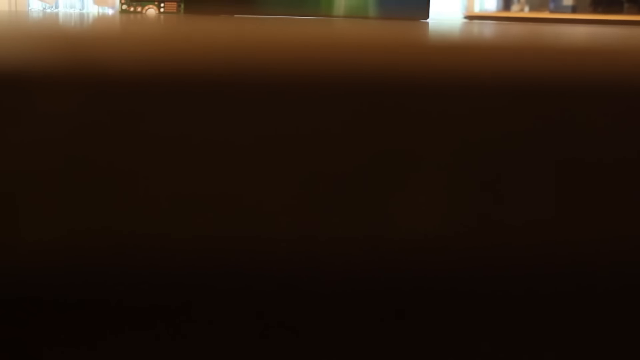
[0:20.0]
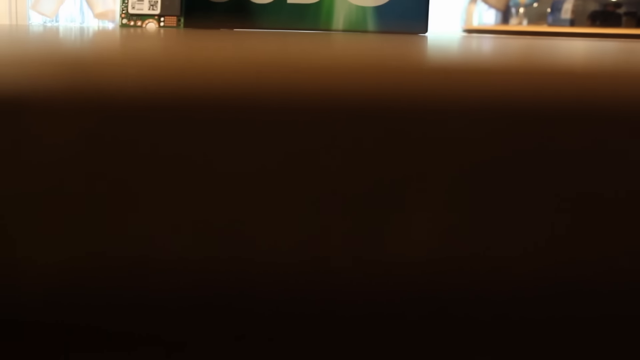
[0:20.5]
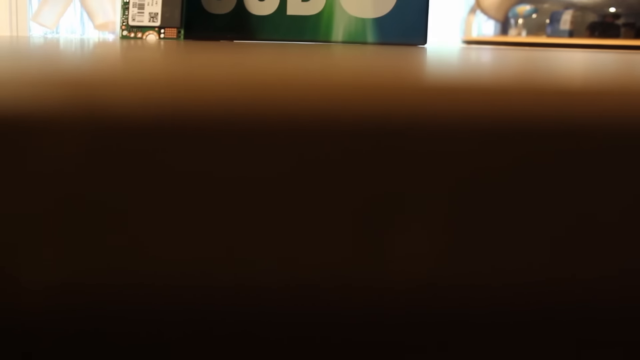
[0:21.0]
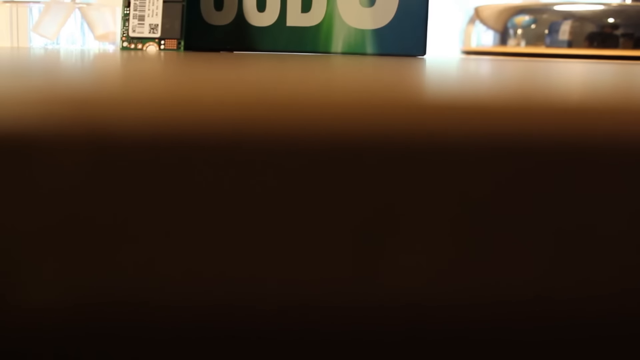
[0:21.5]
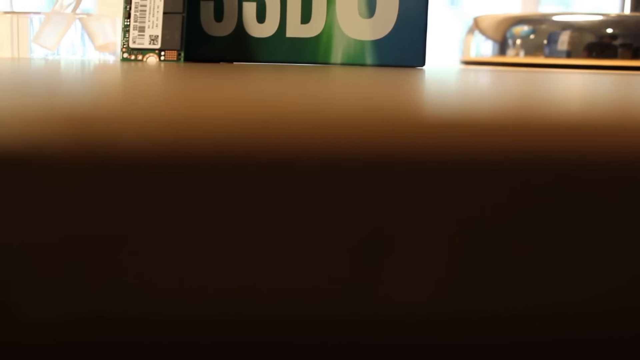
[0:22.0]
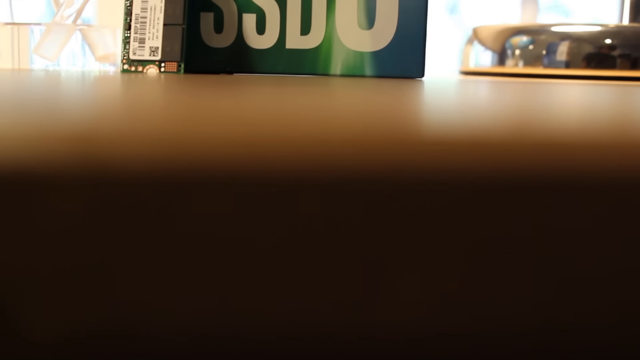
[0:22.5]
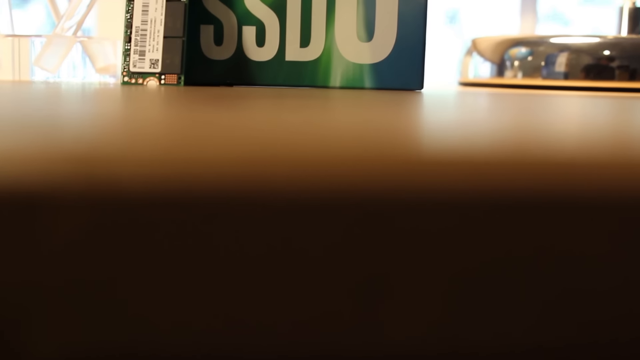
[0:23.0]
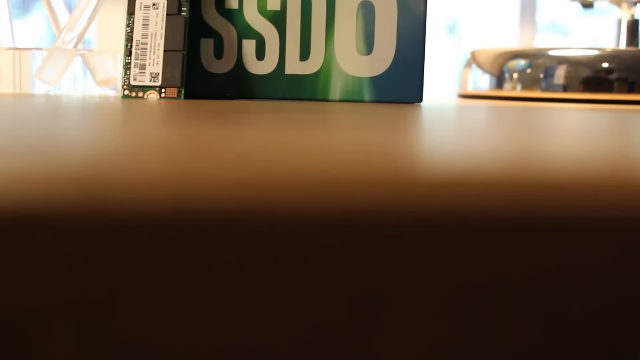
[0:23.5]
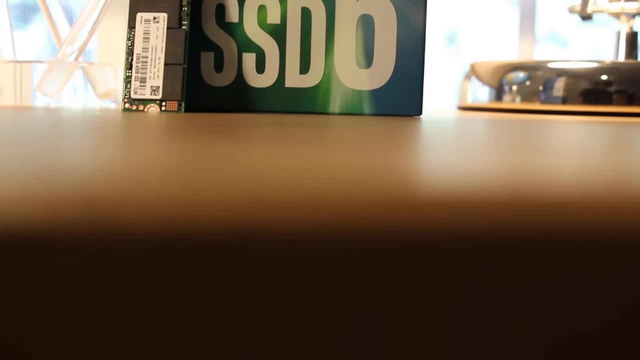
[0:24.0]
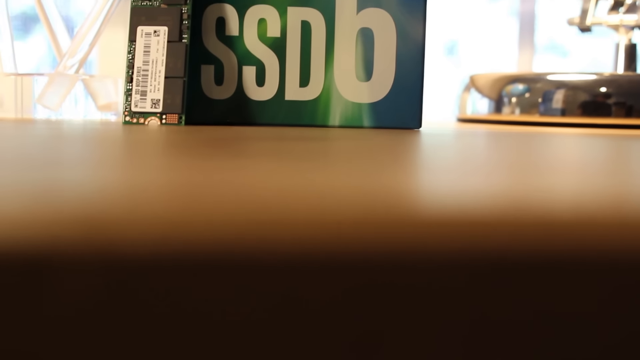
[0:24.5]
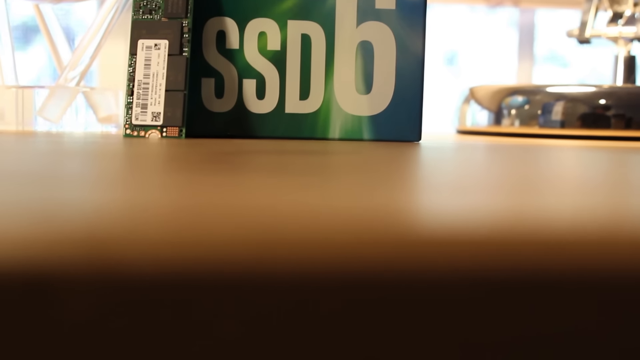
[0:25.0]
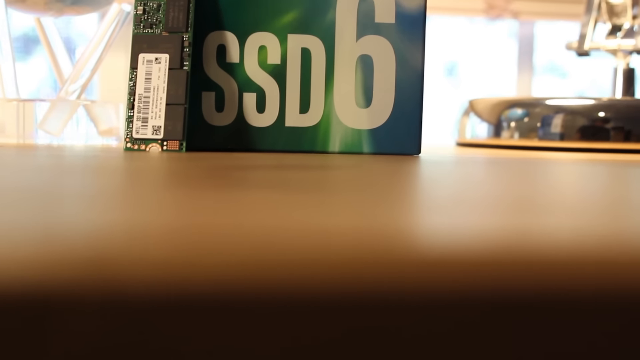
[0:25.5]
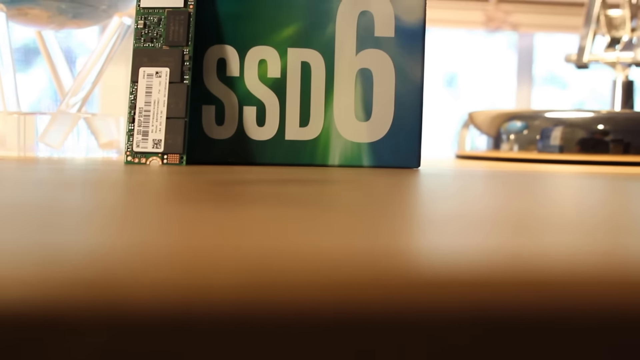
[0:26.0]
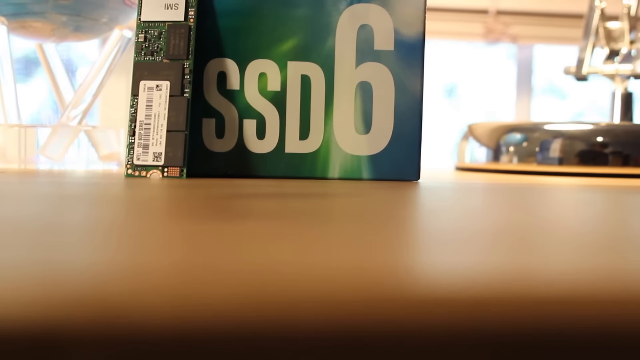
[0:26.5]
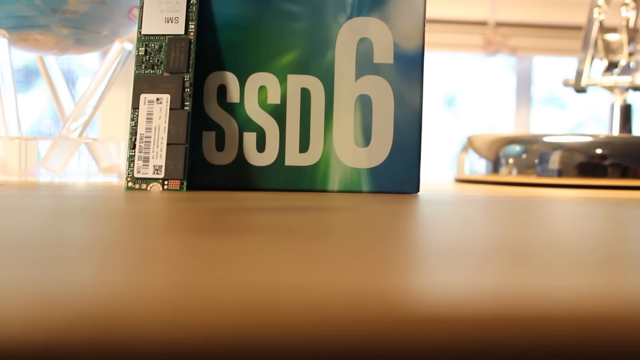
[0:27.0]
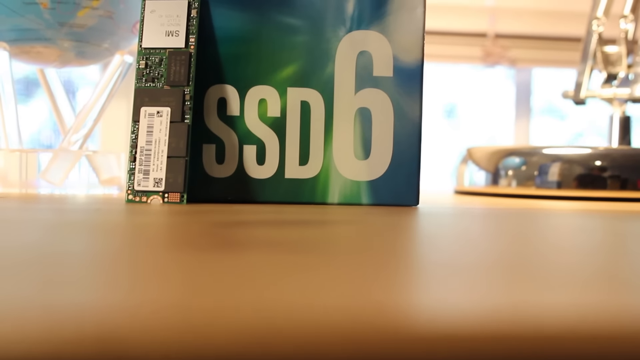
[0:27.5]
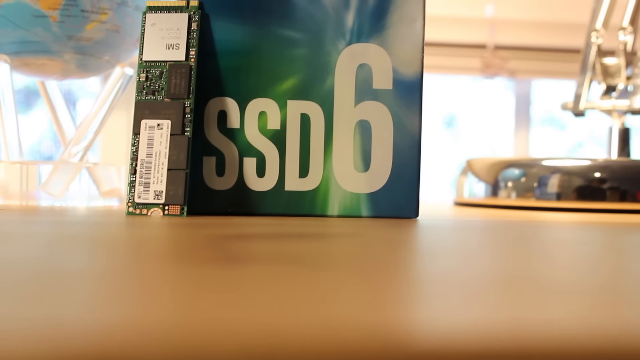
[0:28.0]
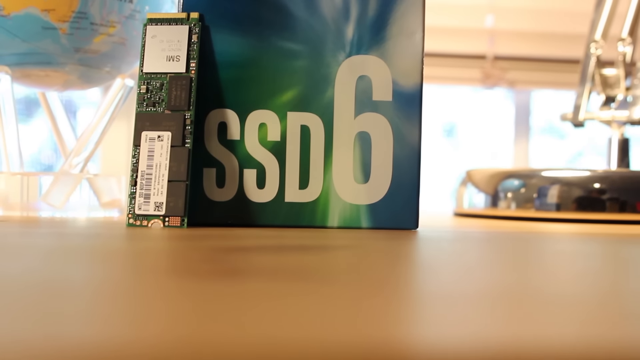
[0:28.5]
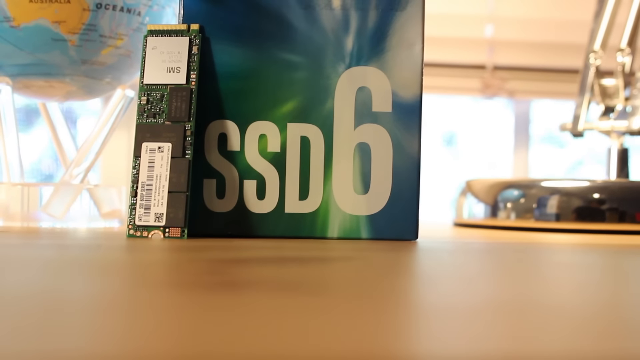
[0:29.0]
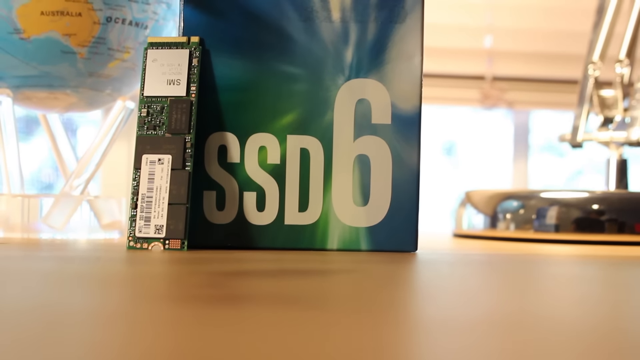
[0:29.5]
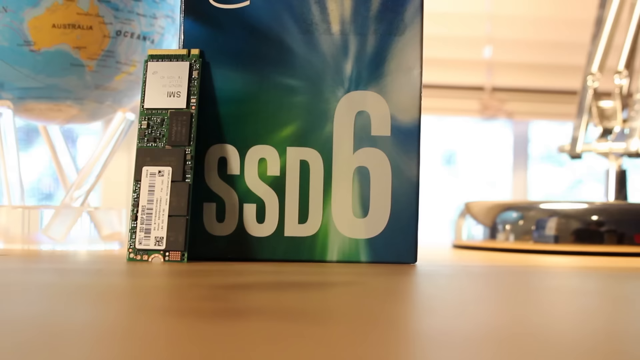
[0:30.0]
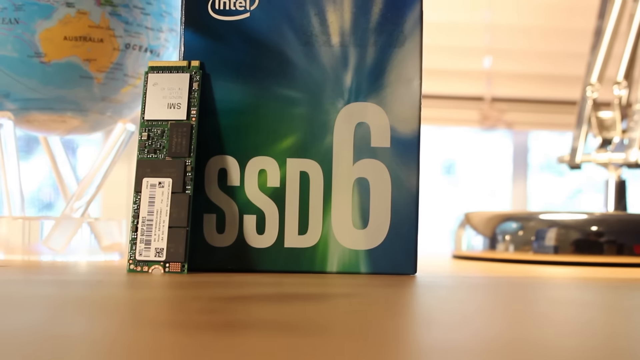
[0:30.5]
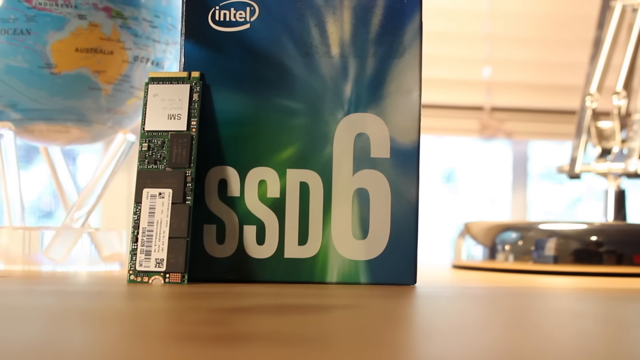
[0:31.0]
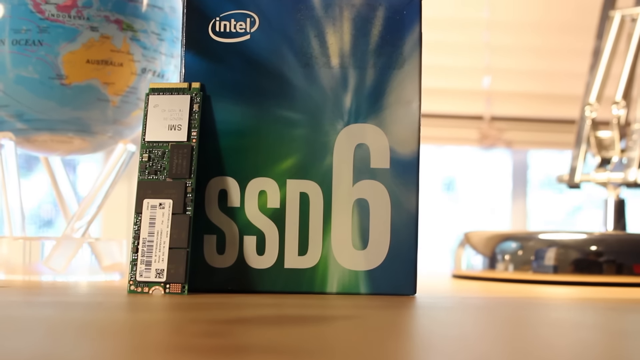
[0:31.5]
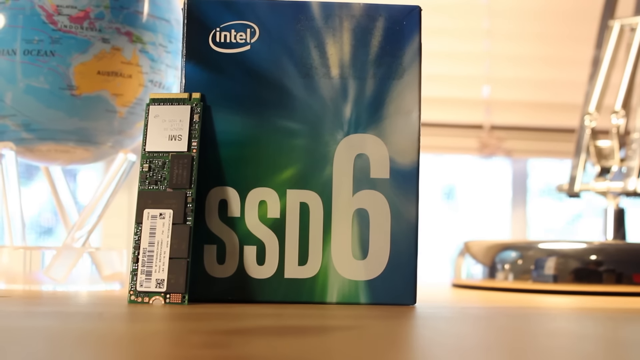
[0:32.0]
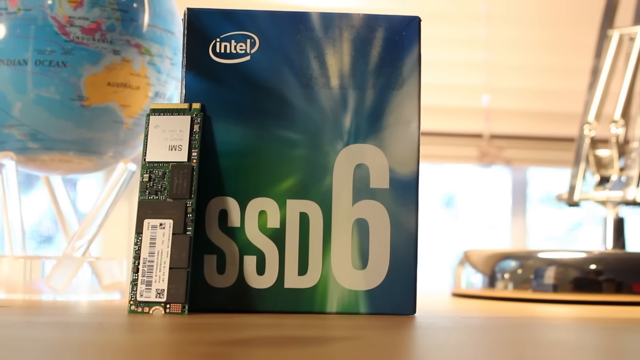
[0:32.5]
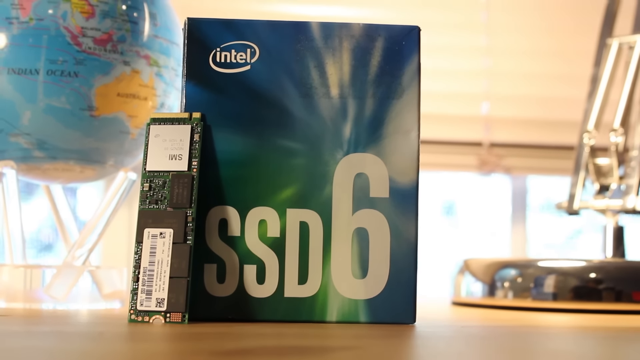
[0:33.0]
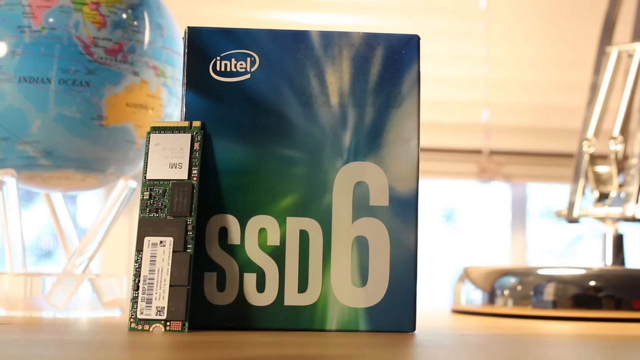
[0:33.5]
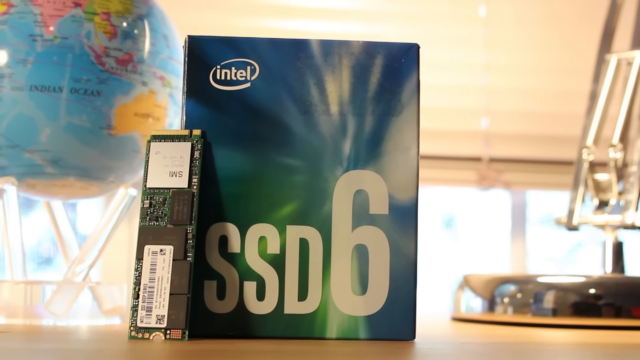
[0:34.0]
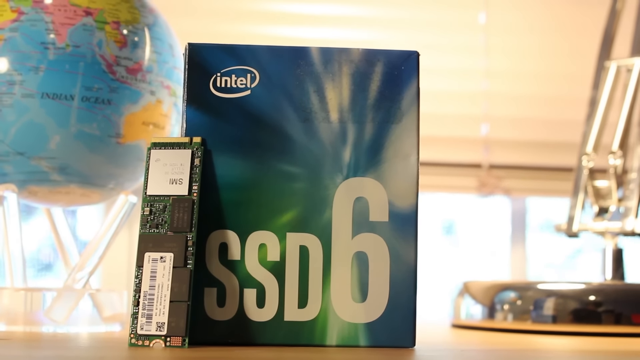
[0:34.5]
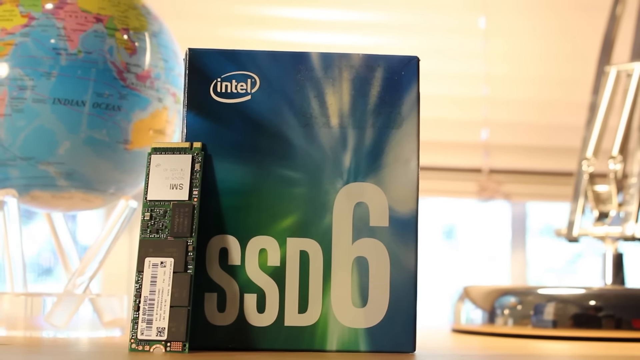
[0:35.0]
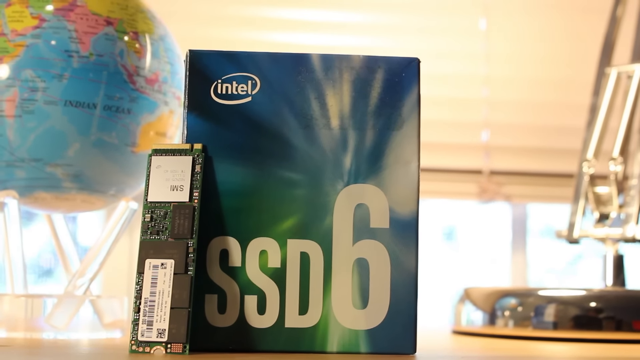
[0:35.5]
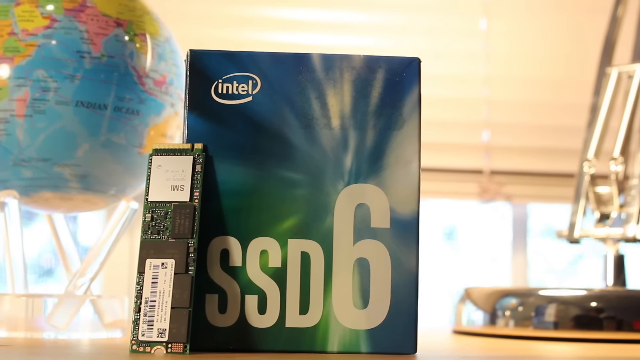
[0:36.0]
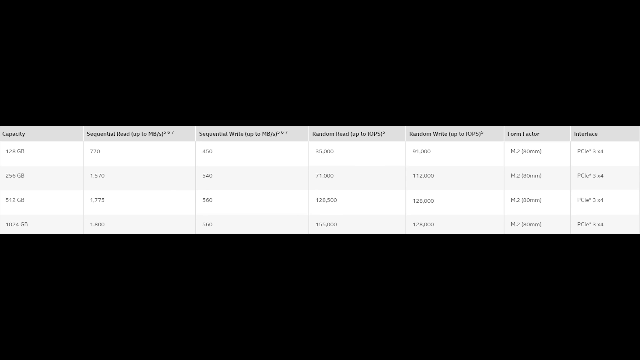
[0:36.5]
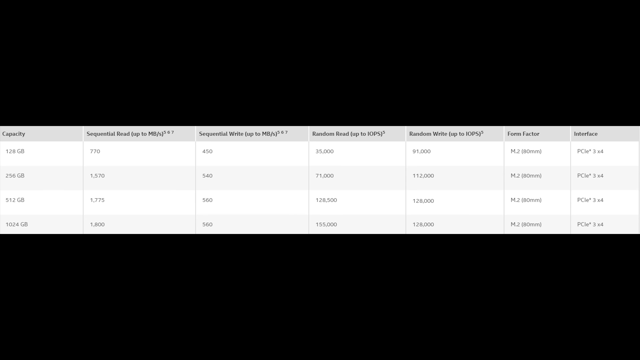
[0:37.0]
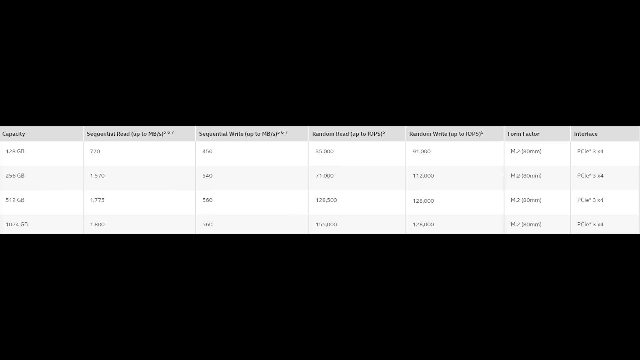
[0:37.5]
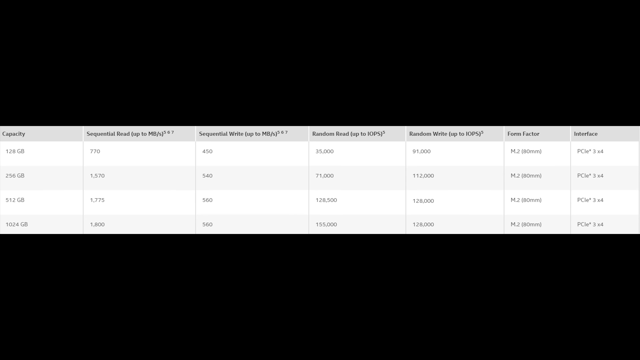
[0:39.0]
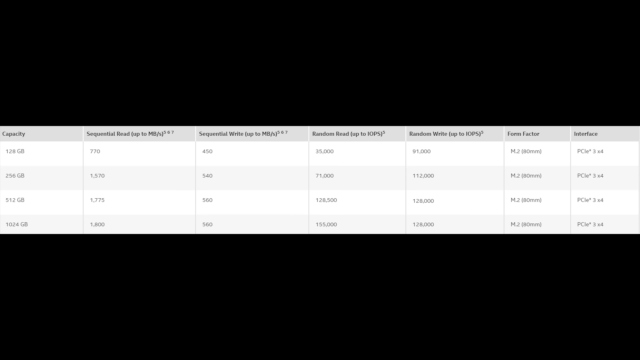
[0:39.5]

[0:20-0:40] A slow camera shot pans upward over a desk. At first the screen looks dark brown; then the edge of the desk comes into view with some items on it. Some kind of computer chip is leaning against something that may be a box, of which only the front is visible. It has the Intel logo in the top left corner, "SSD6" in large white all-caps letters, and an illustration of green, blue and white lights. The chip leaning against the box has a bunch of little silver components, black rectangles and a barcode on it. To the left is a slowly spinning globe that looks like it is made of clear, shiny plastic or glass. Next comes a graph of very technical information, with headers such as capacity and interface. It has four rows, each with more technical information; the rows are white with black text, and the headers are gray.